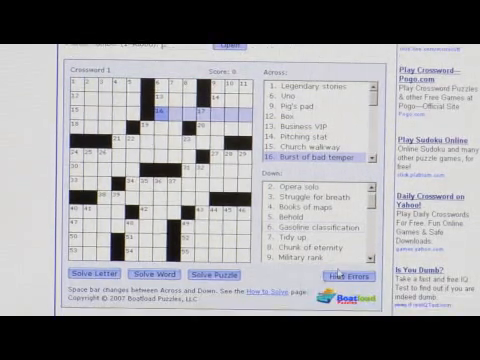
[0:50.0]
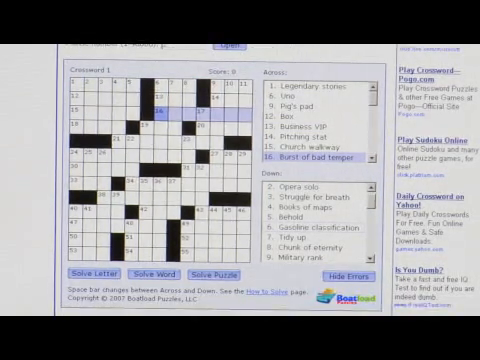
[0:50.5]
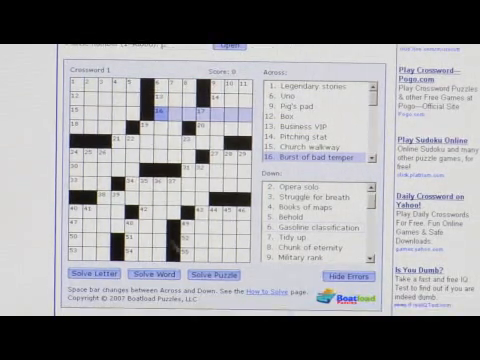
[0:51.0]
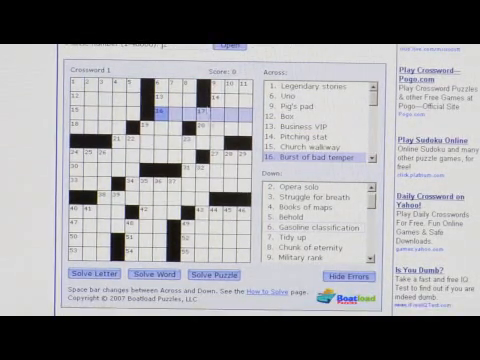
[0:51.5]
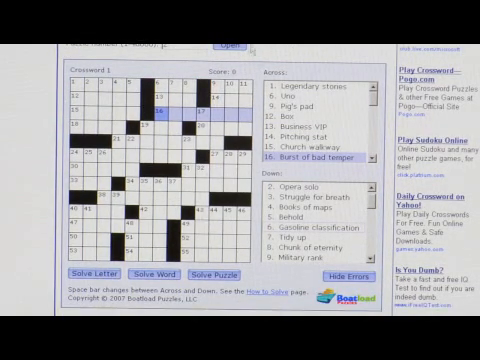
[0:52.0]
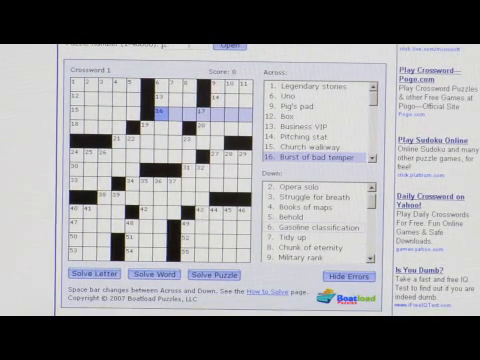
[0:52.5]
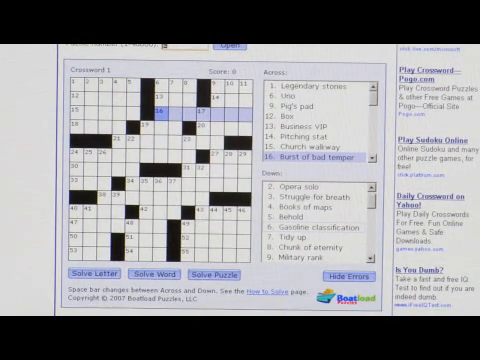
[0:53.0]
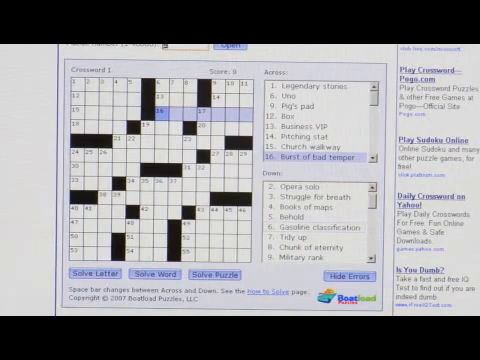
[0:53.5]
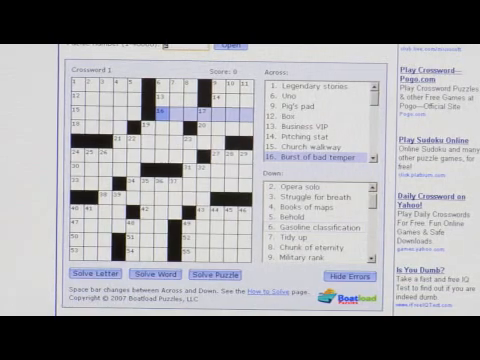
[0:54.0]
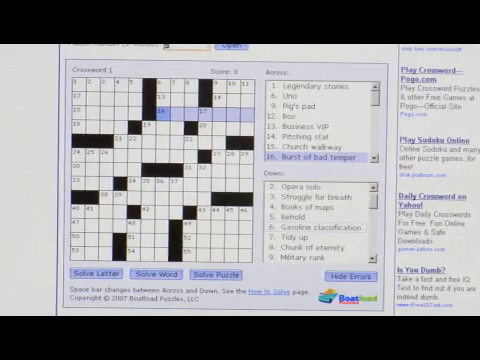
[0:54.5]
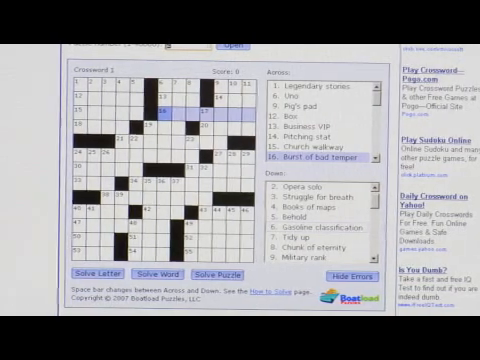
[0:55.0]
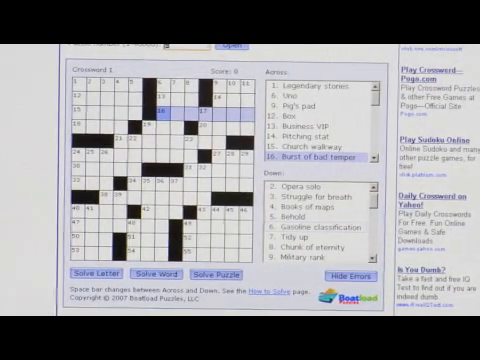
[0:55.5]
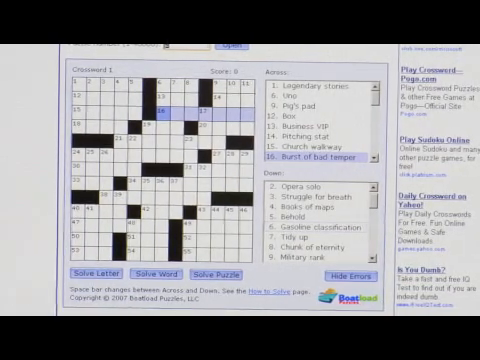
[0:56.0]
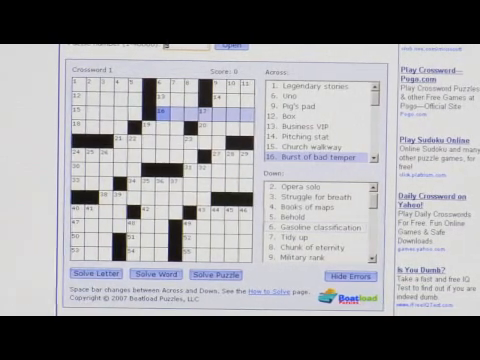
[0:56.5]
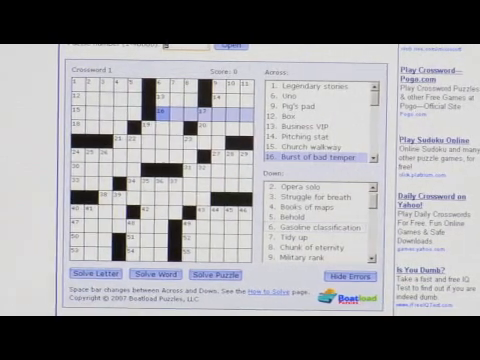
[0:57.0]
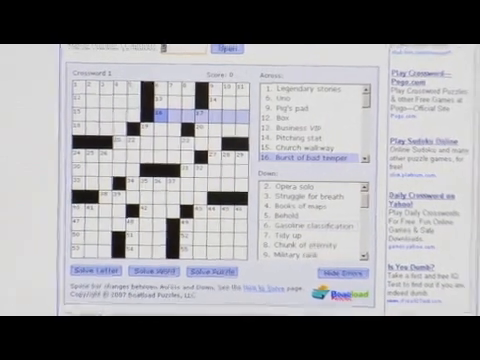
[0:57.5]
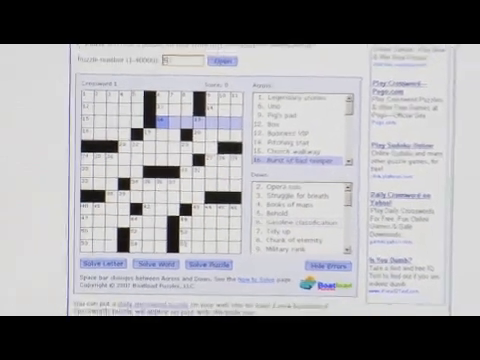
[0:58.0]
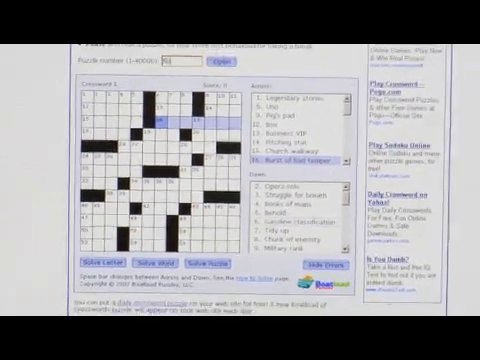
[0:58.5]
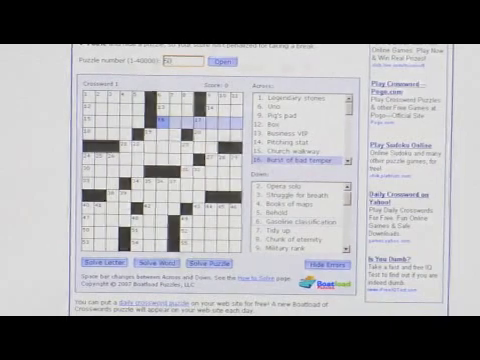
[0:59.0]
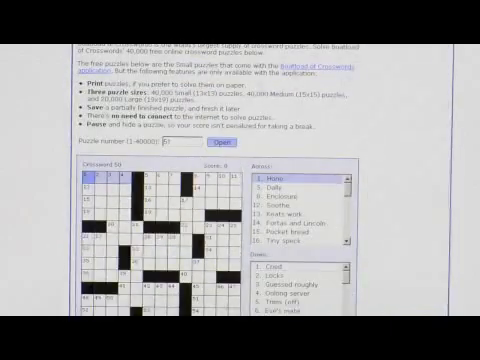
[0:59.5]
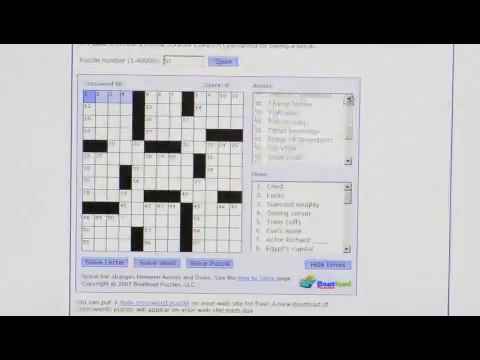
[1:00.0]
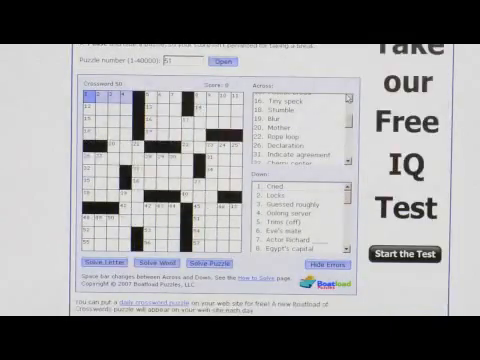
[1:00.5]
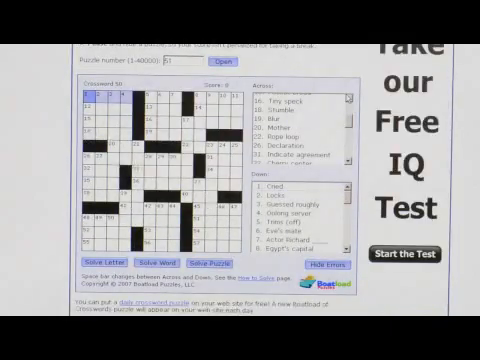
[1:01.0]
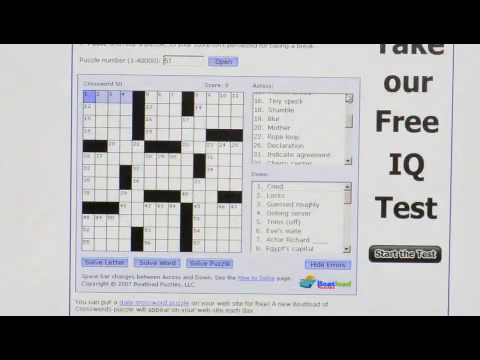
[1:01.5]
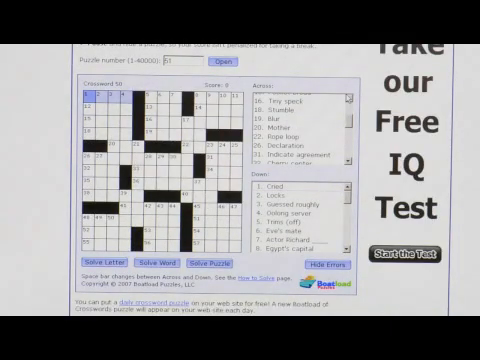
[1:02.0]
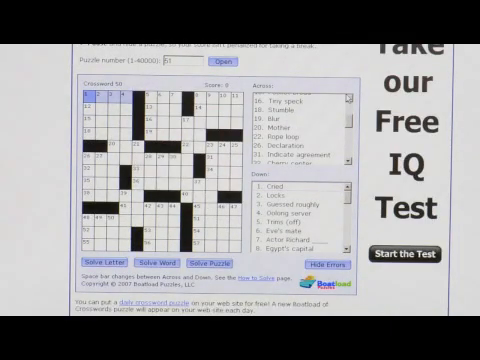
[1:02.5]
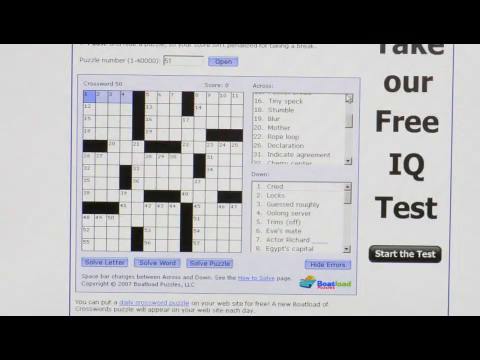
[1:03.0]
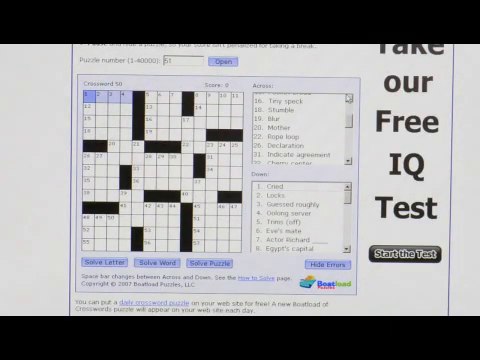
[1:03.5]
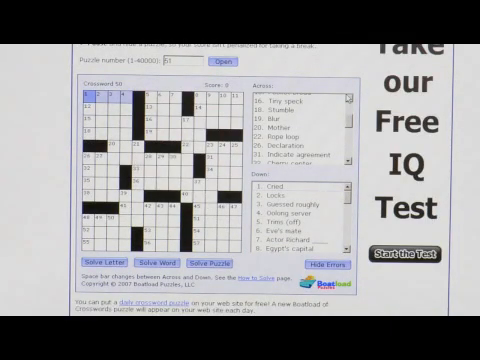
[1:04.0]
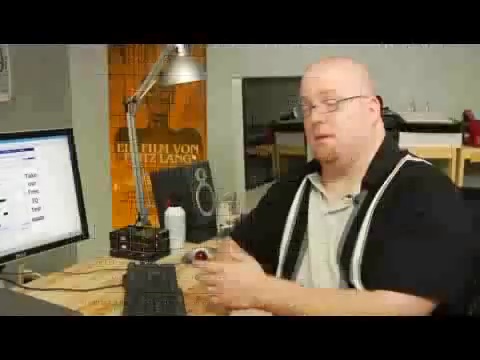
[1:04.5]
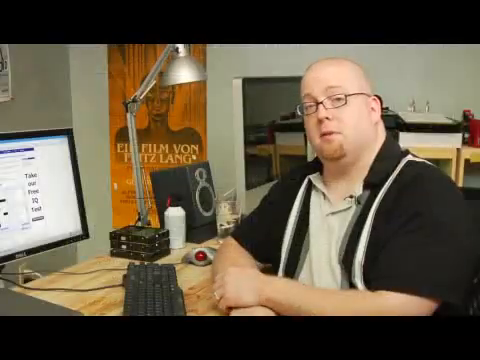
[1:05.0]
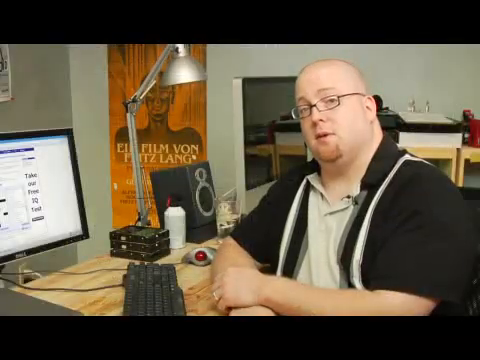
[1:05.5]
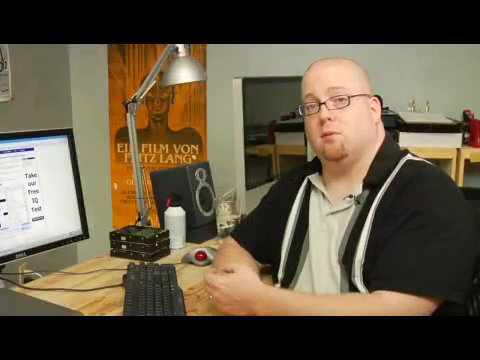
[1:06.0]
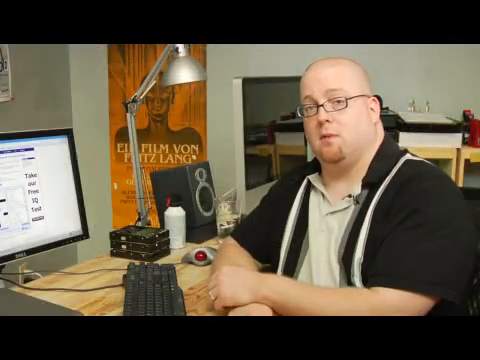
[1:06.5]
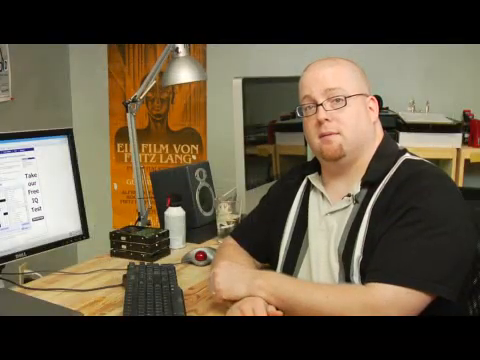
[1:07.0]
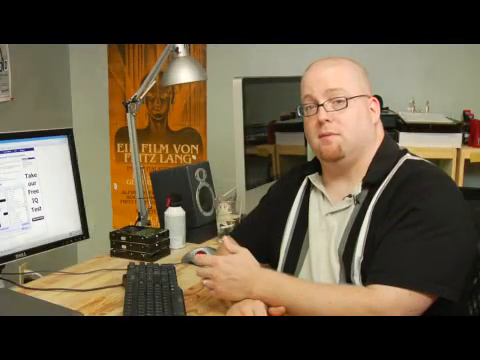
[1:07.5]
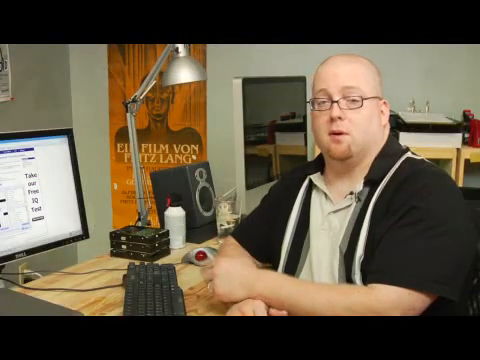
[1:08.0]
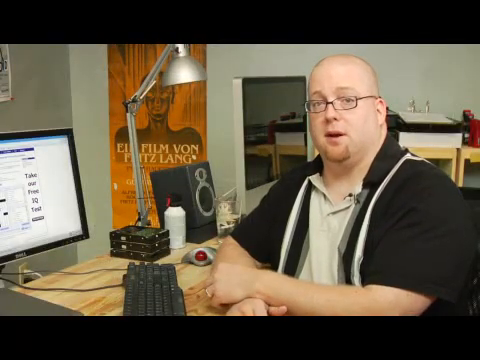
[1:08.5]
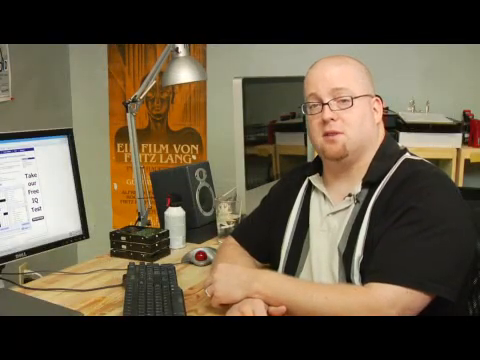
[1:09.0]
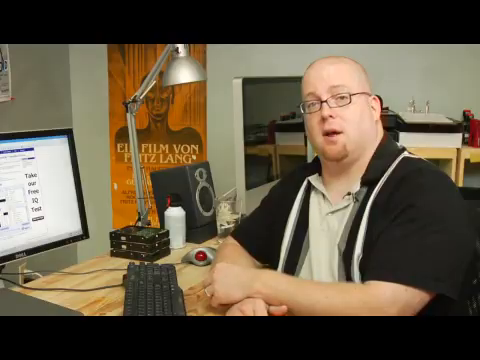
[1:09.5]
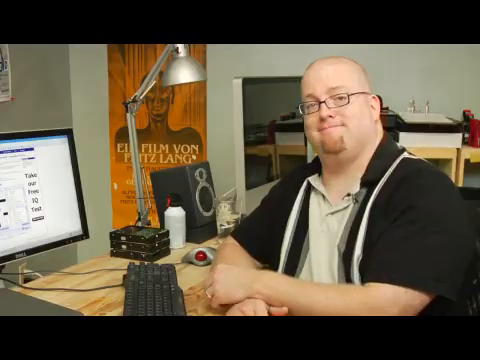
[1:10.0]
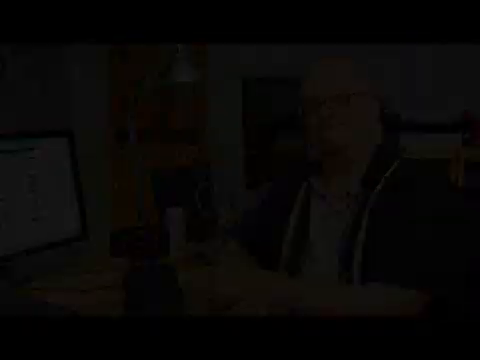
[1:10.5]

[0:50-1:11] What seems to be a crossword puzzle, crossword one, is shown. Below it is a grid with numbers along the top in order 1, 2, 3, 4, 5, then a black square, then 6, 7, 8, another black square, then 9, 10, 11. To the right is the word "across:" and below it a box listing numbered clues on the left side, each followed by a dot and words: "1. legendary stories", "6. uno", "9. pig's pad", "12. box", "13. business VIP", "14. pitching stat", "15. church walkway", "16. burst of bad temper". To the right of the box is a scroll bar, positioned all the way at the top, suggesting the list presumably continues further down. At the bottom, in the same format, is the word "down:".